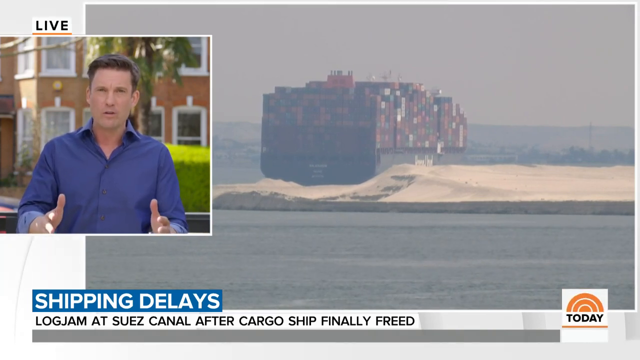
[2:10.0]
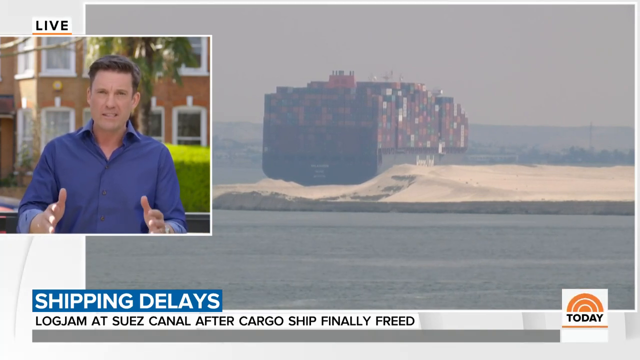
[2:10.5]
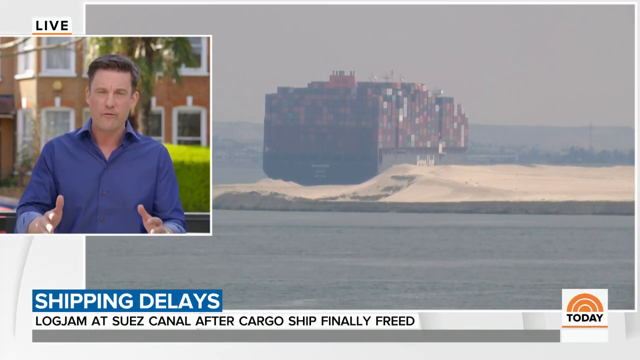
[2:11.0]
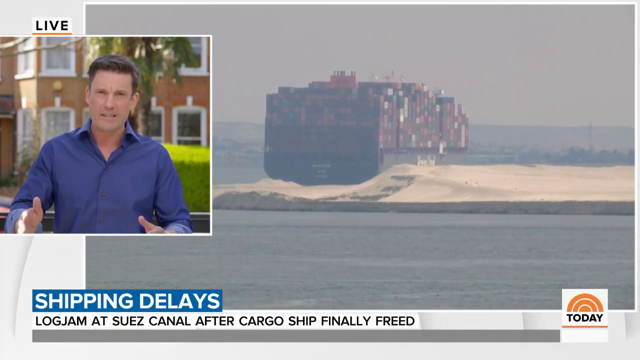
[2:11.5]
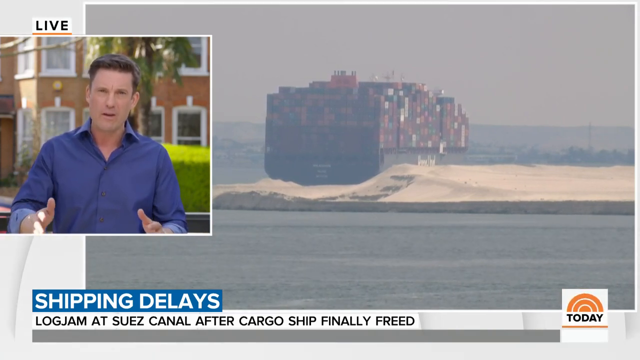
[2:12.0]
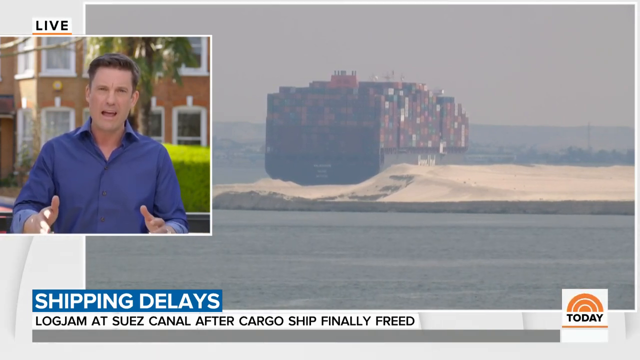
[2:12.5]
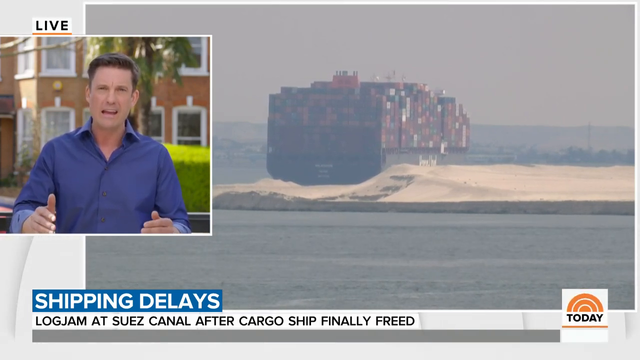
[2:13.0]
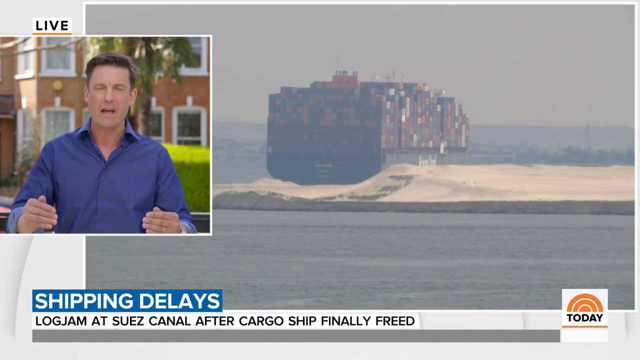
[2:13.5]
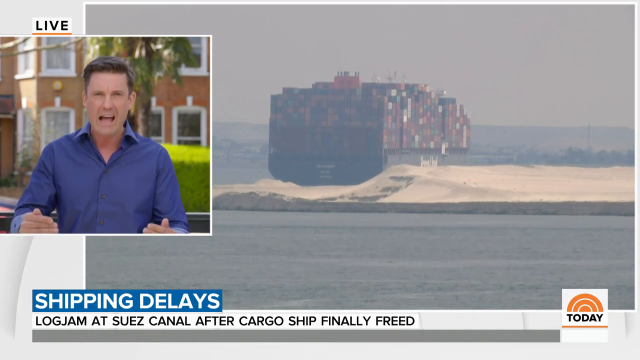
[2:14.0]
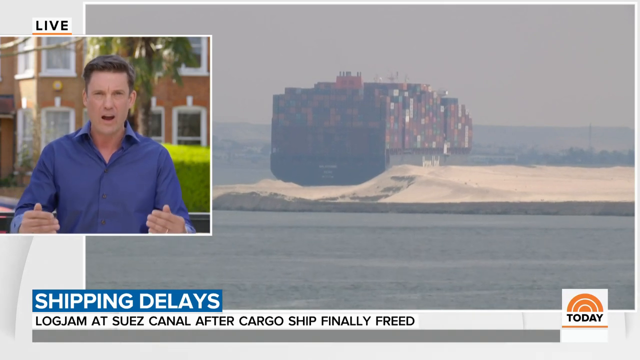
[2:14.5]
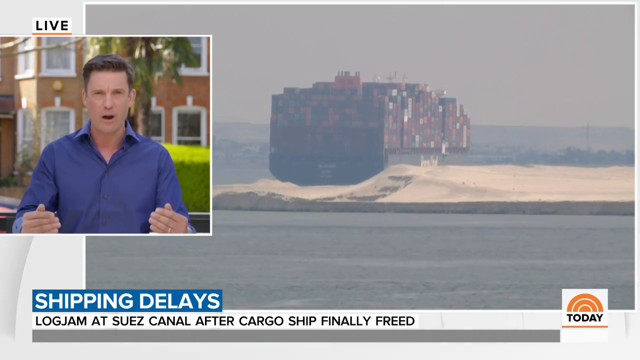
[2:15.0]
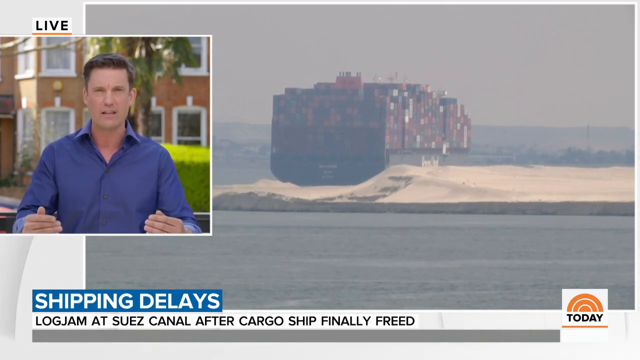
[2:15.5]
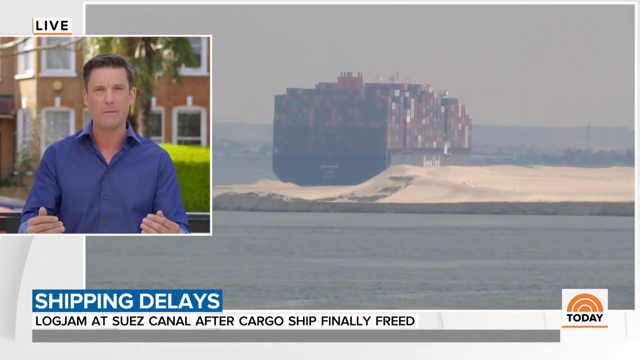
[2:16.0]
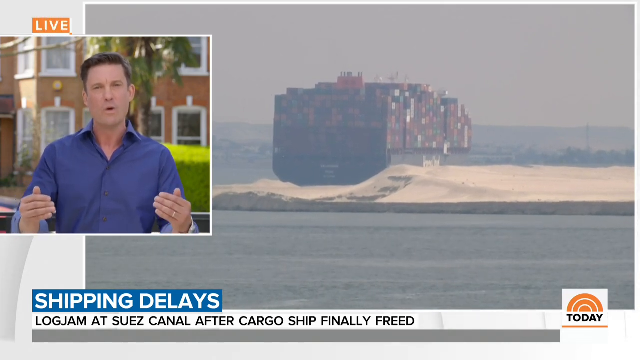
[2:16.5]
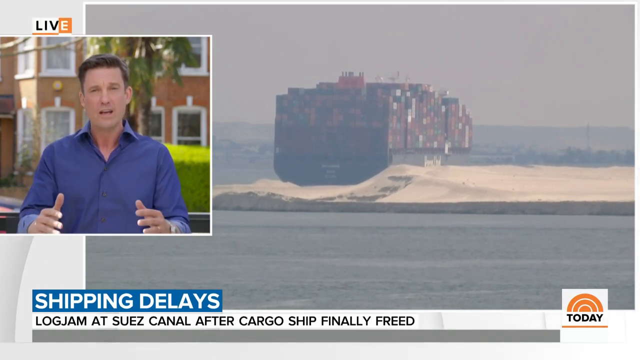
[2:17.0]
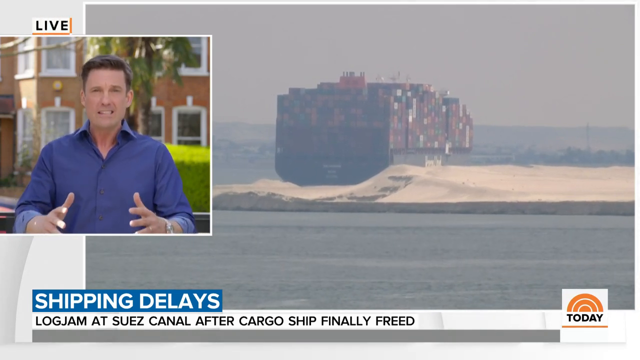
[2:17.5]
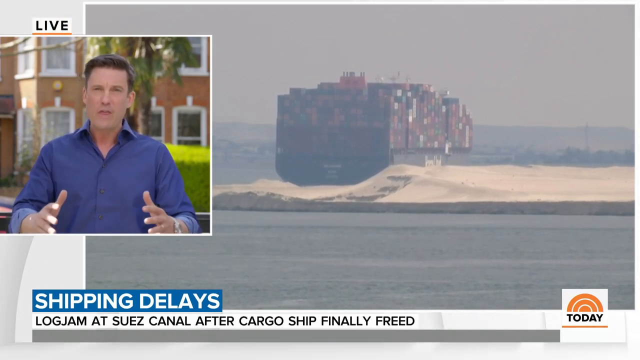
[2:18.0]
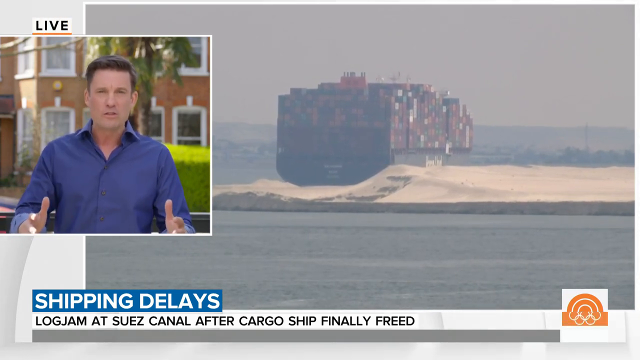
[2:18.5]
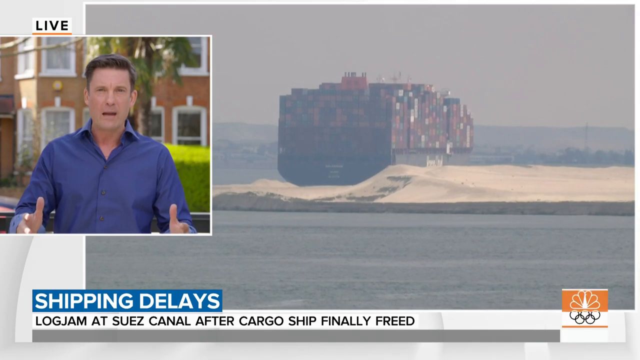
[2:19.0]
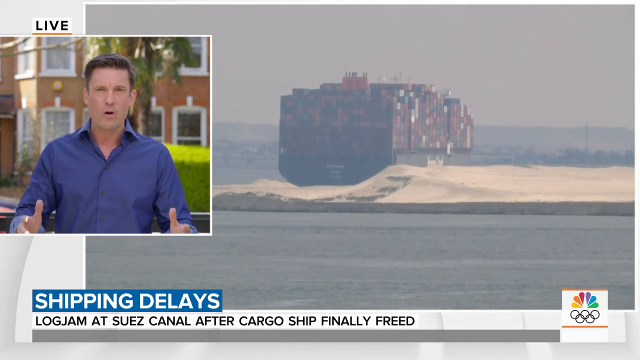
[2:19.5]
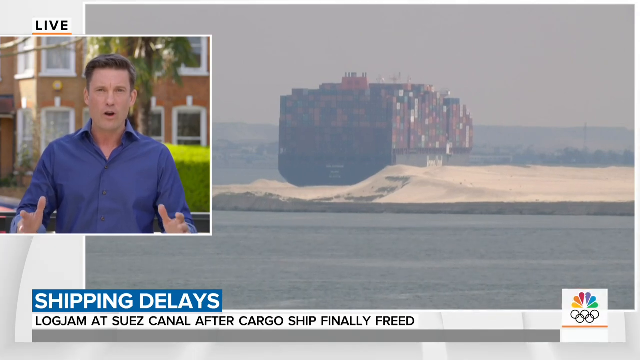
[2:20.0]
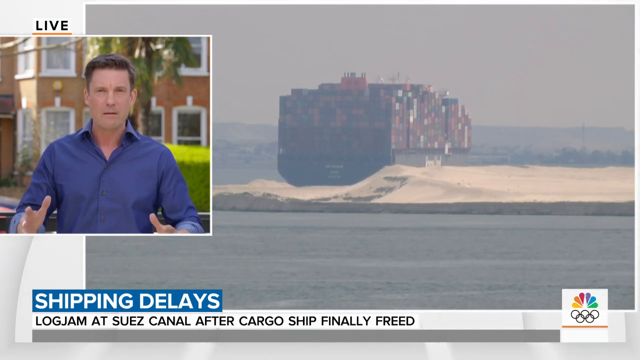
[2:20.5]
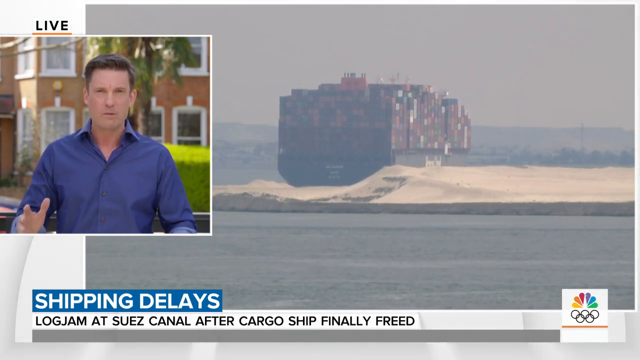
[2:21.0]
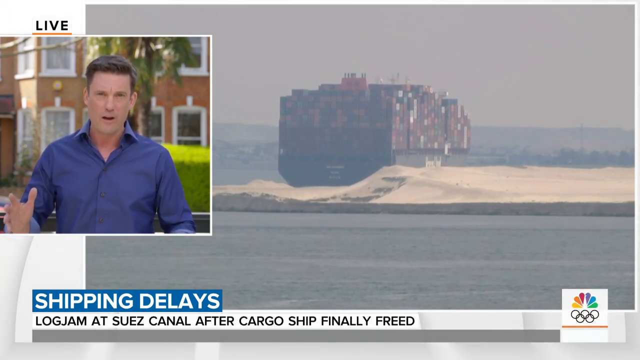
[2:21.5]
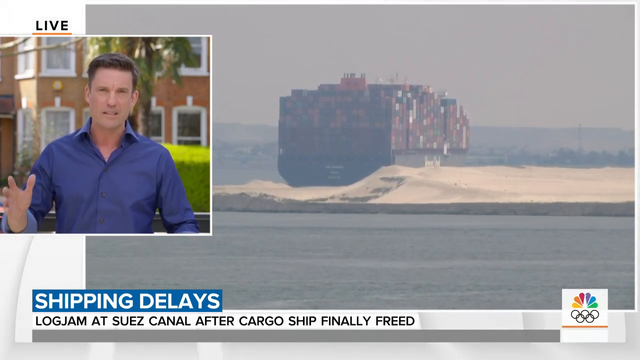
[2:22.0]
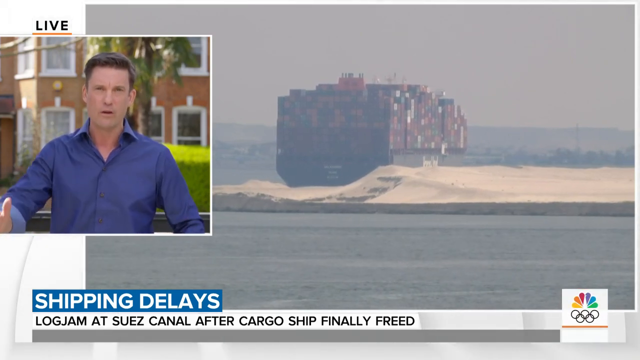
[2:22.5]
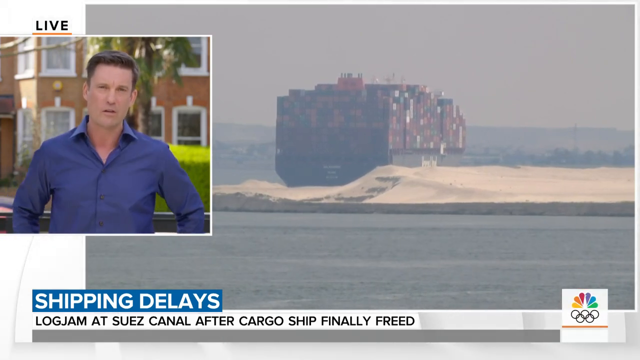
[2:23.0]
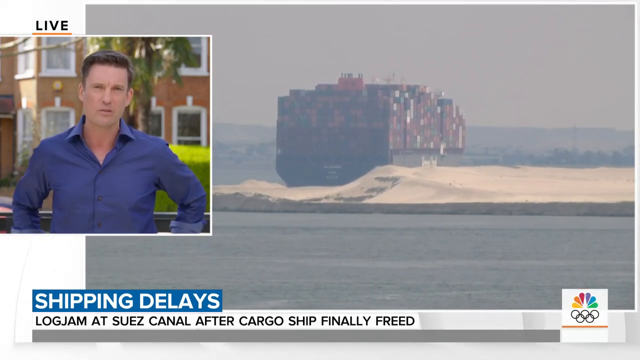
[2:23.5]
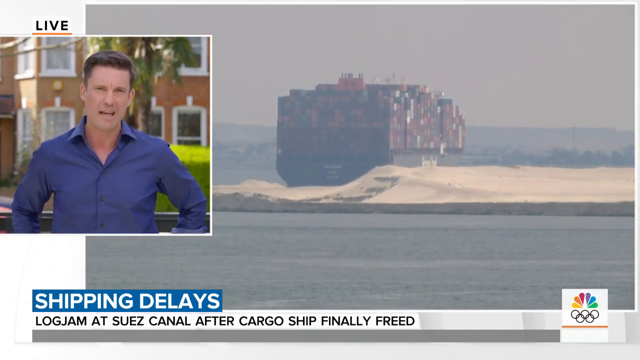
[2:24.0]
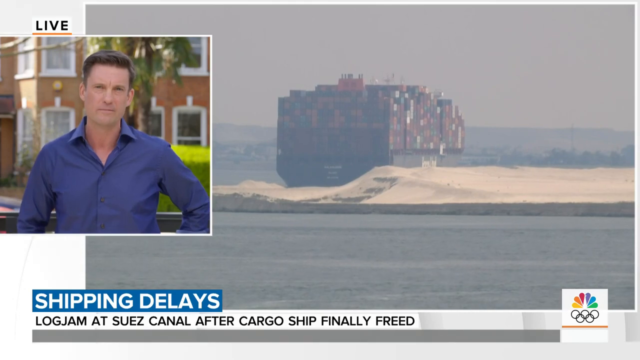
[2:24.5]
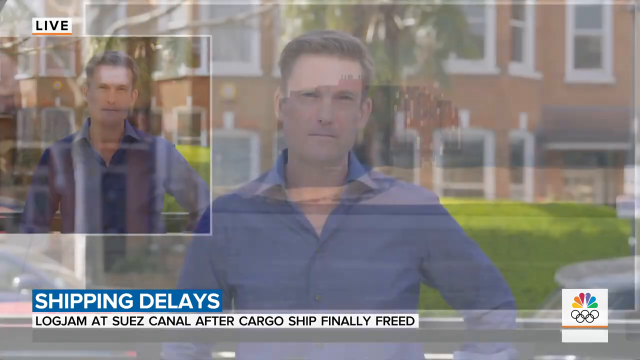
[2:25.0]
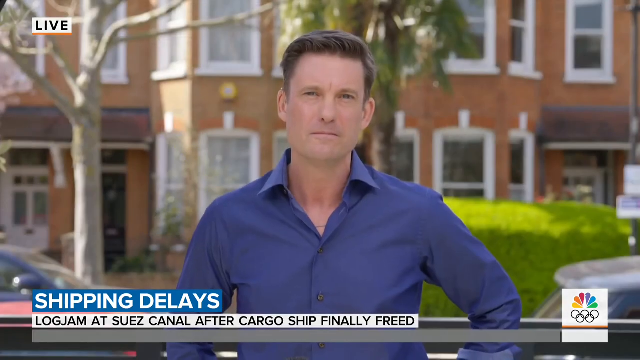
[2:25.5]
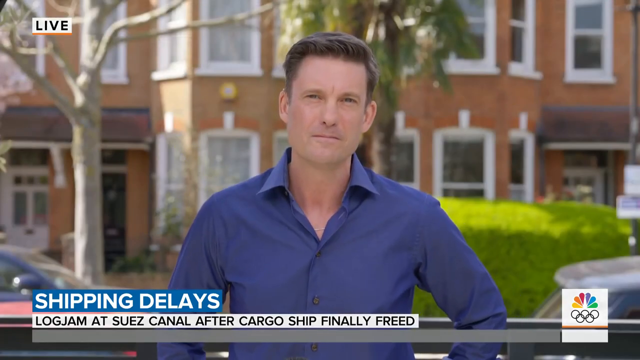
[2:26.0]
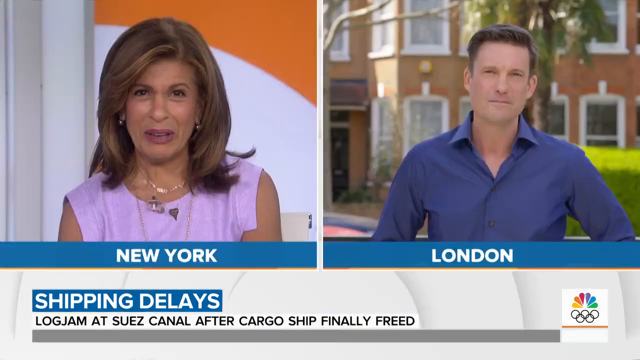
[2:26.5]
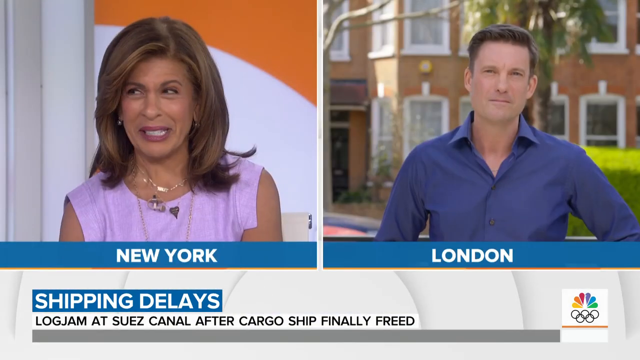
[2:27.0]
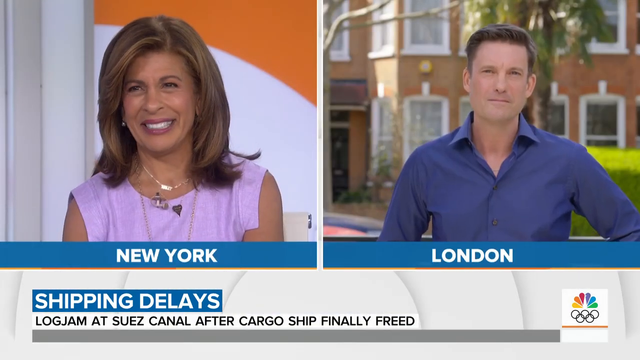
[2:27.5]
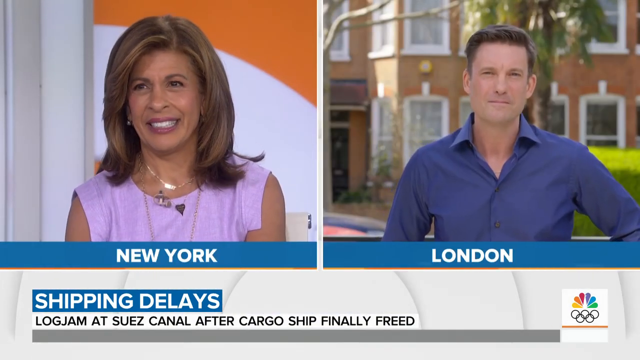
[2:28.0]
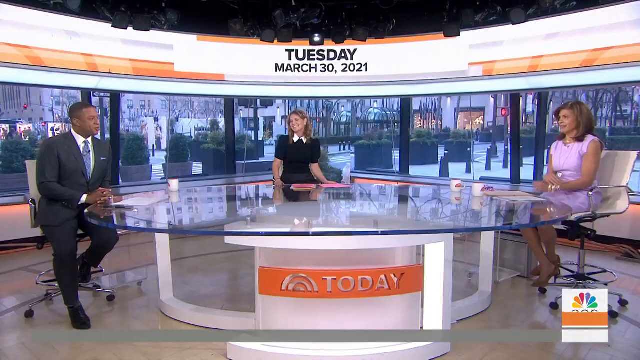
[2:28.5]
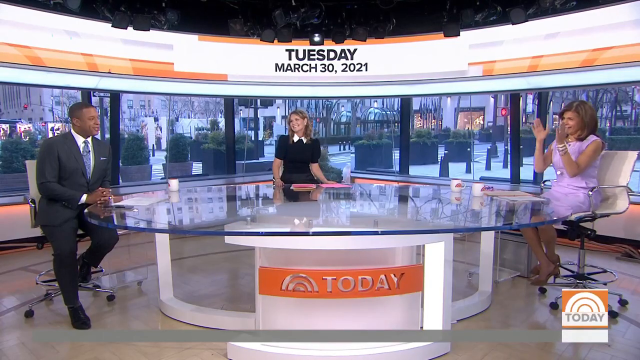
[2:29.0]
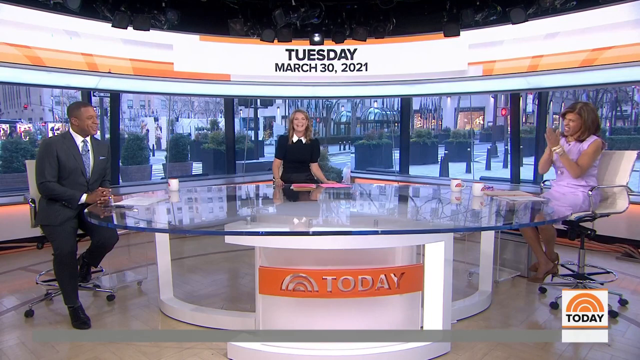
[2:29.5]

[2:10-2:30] The same split view continues, with the reporter on the left moving his hands slowly up and down as he talks into the camera, all his fingers pressed together. On the right side, the ship, seen from behind and carrying tons of freight, continues moving very slowly through the water. The man then puts his hands at his sides, and only his upper arms and above are visible. The view briefly changes back to a full shot of the reporter and his surroundings, then returns to the split screen with the woman reporter from New York on the left and the male reporter from London on the right. The camera then cuts to a newsroom with three reporters: the woman from New York on the right in a purple dress, another woman in a black dress in the background, and a male reporter on the left. They are sitting at a glass table, below which is "Today" on an orange background.